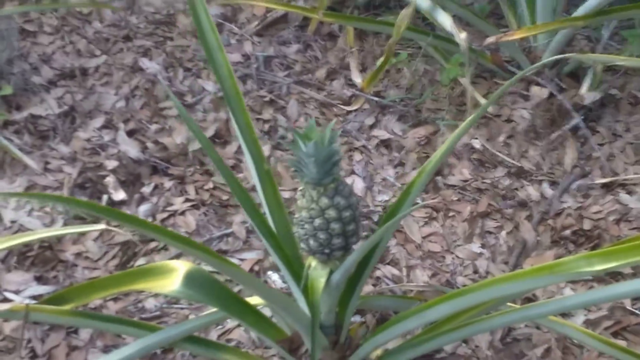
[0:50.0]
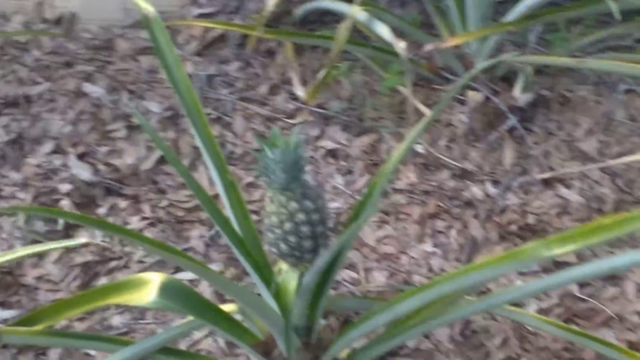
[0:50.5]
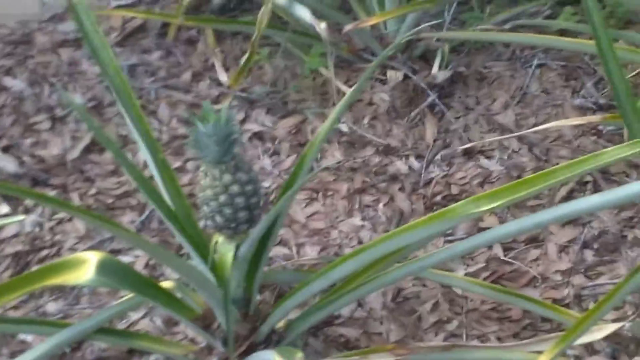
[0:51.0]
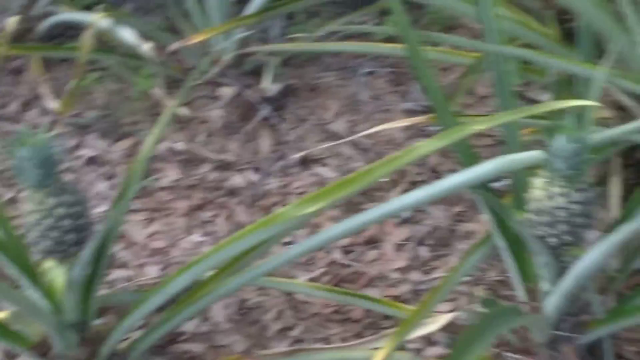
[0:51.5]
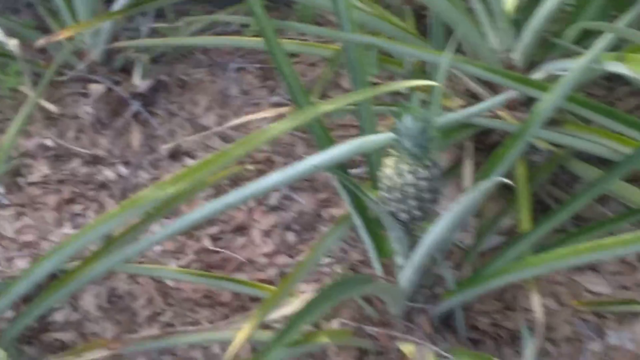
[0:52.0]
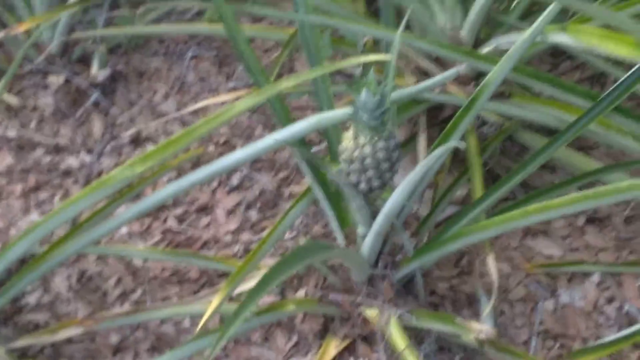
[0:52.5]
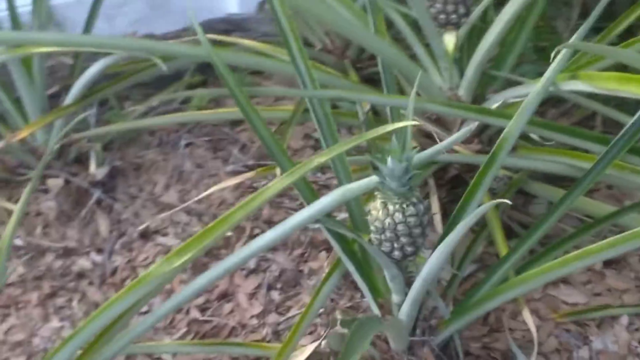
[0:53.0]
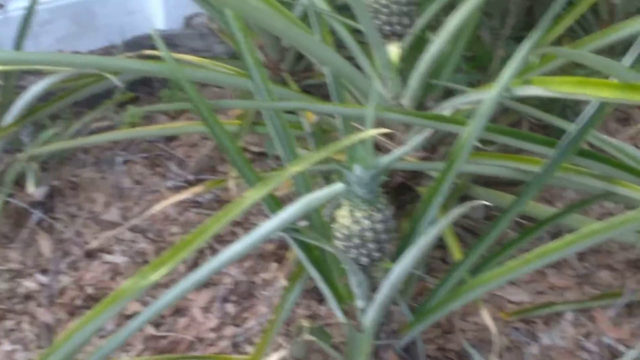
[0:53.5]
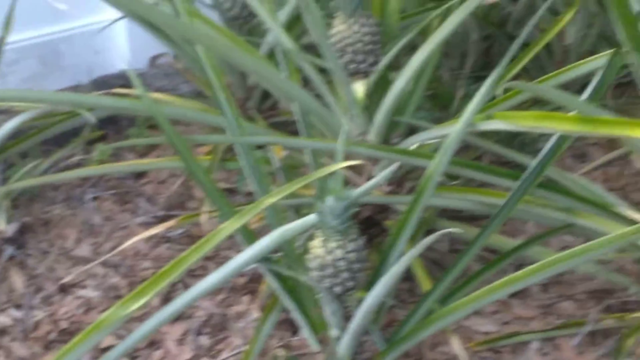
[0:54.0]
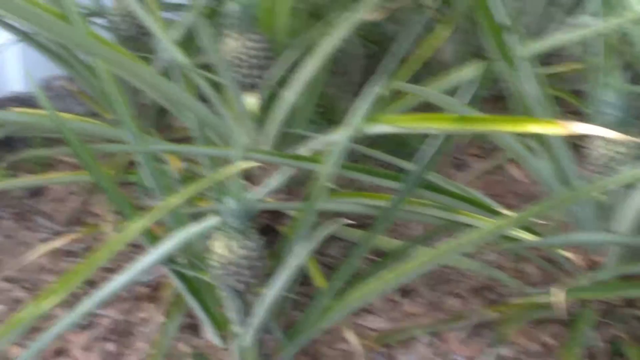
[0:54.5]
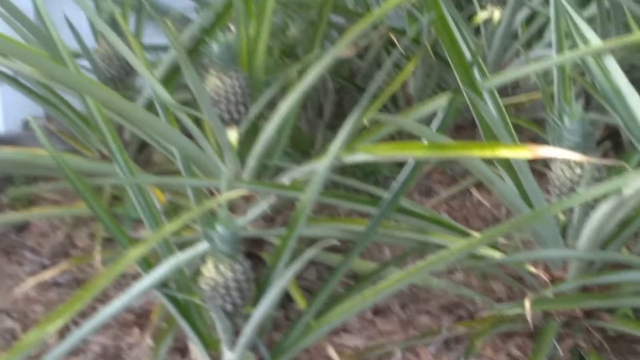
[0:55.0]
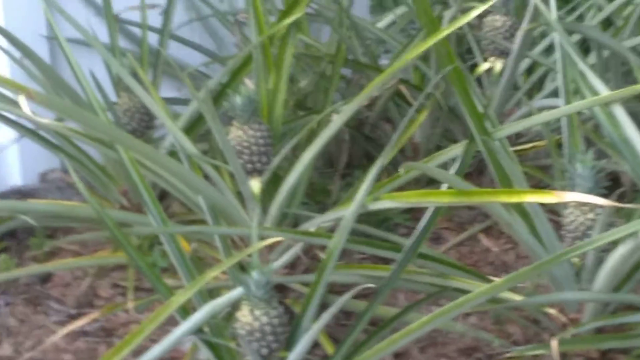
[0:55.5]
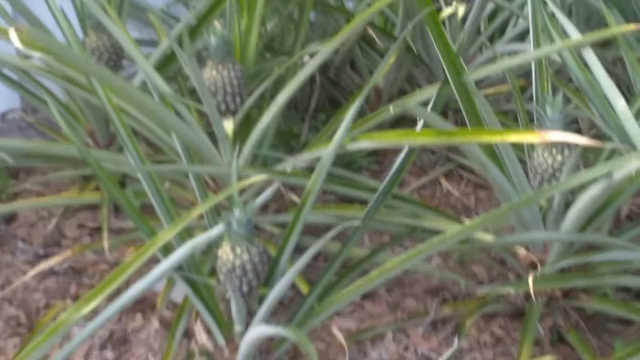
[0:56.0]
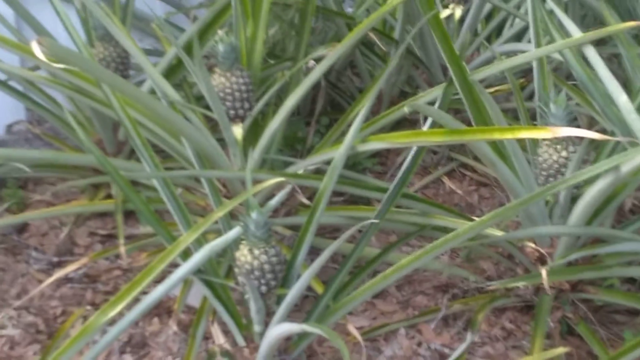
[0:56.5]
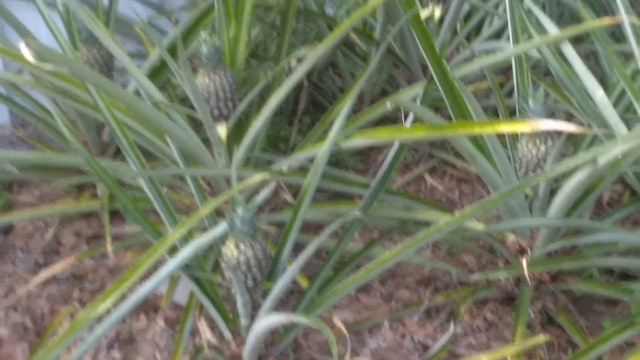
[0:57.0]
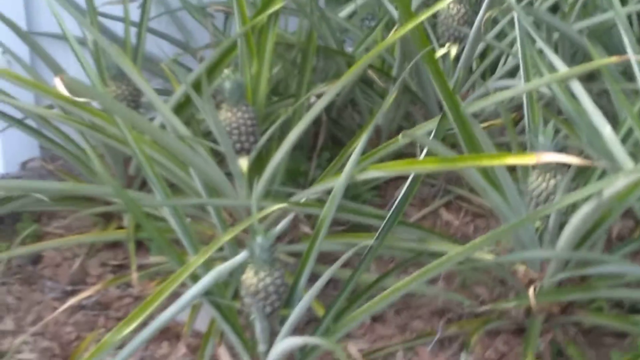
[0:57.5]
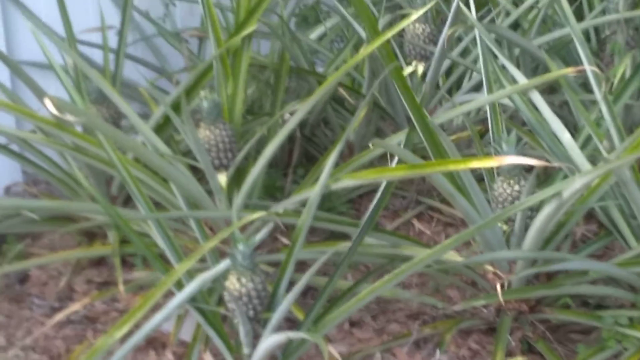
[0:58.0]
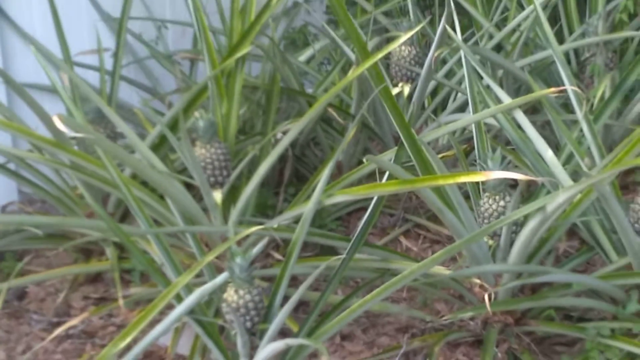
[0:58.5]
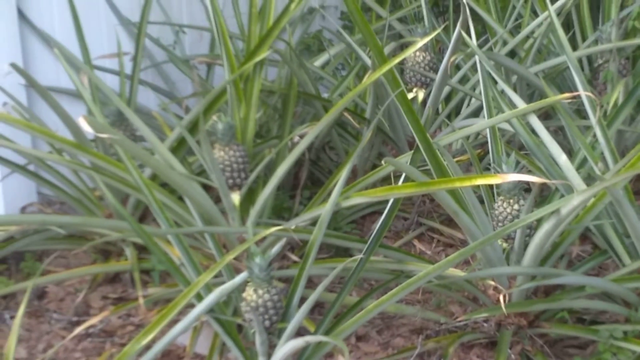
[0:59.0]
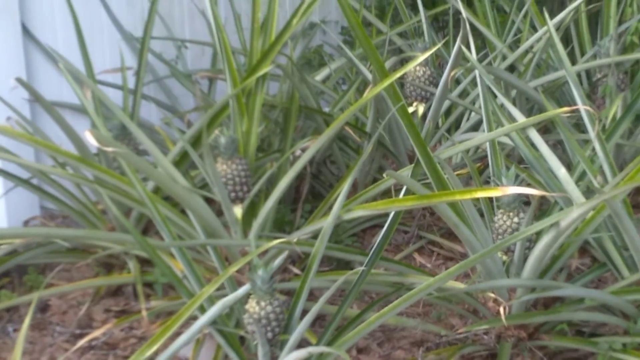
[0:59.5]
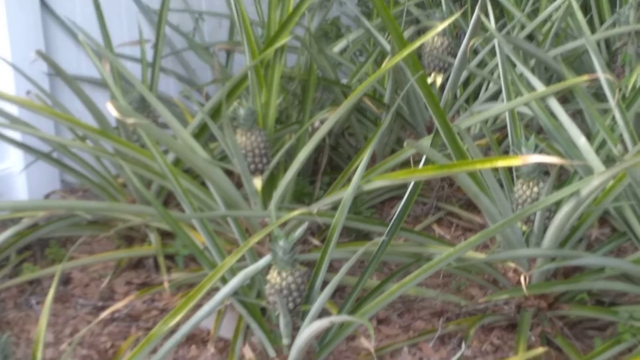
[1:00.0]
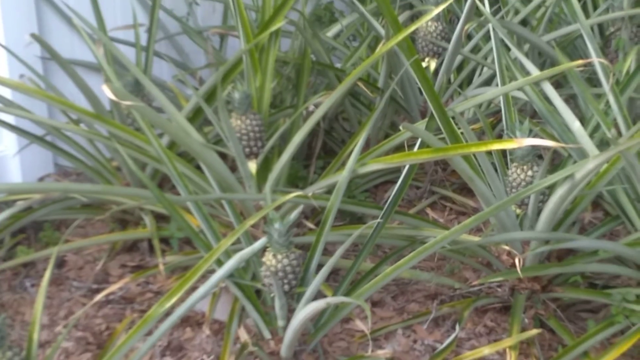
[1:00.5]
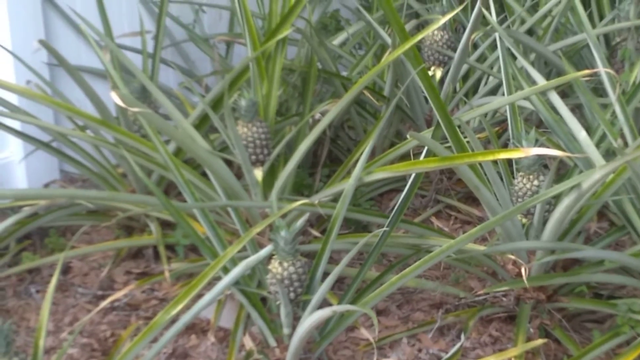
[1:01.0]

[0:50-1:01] A zoomed-in shot shows a baby pineapple, with a background of mulch made of many leaves on the ground. The spiky leaves of the pineapple plant grow from the soil up high into the air; they are very tall, perhaps two to three feet long, growing up and bending over out just a little. The leaves are two-tone green, darker and lighter, with some yellowing at the ends. The camera pans right to show another baby pineapple in its plant, then pans up a little to show three to six more baby pineapple plants.